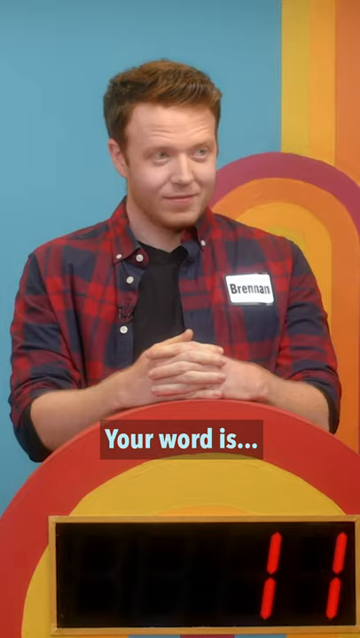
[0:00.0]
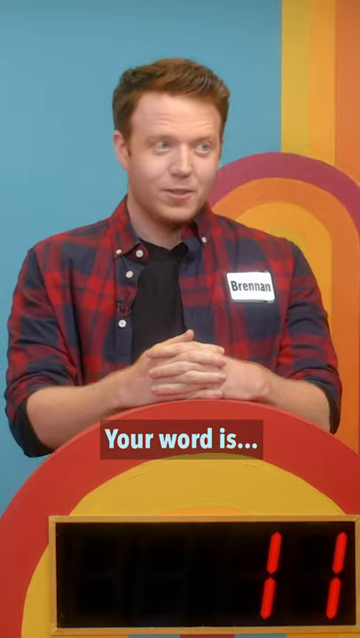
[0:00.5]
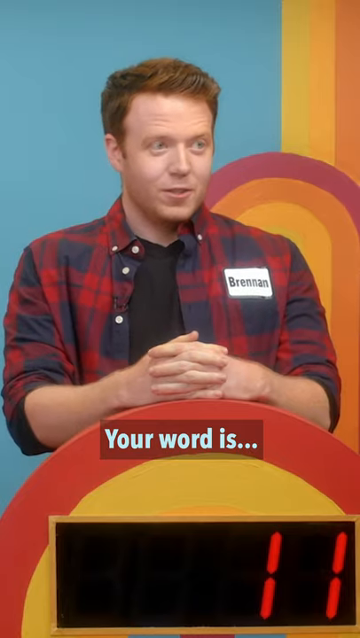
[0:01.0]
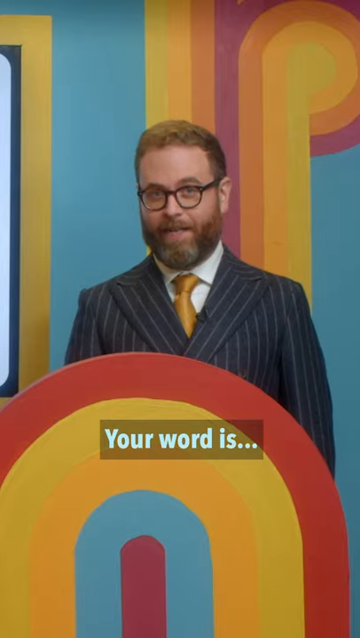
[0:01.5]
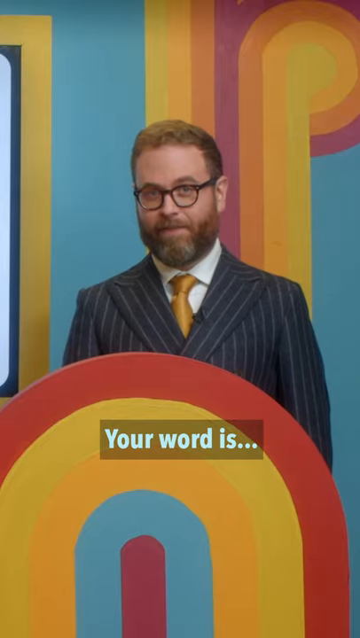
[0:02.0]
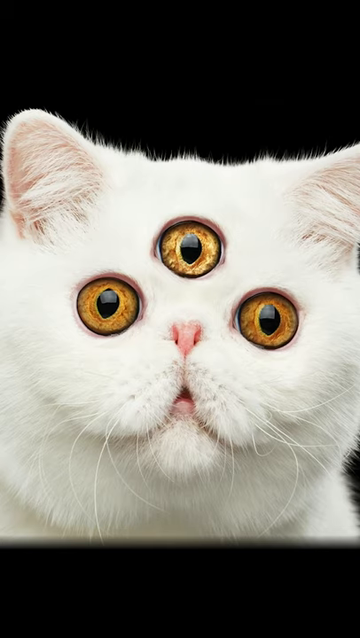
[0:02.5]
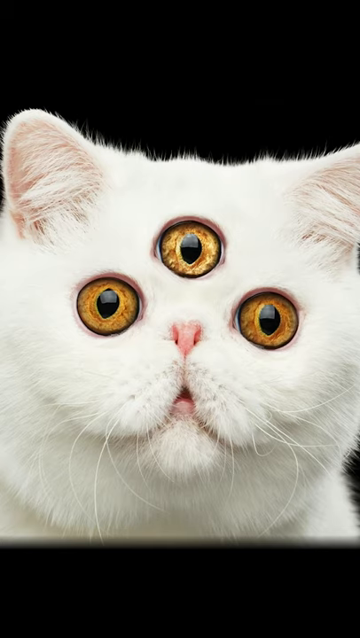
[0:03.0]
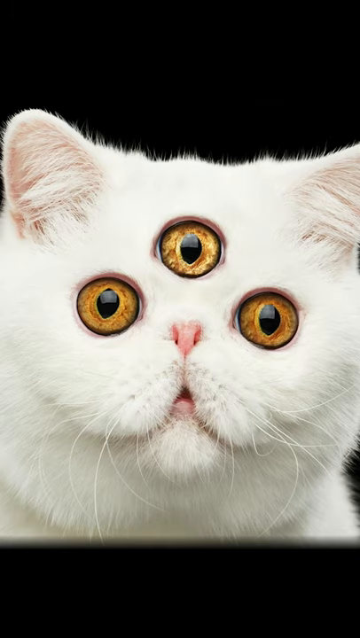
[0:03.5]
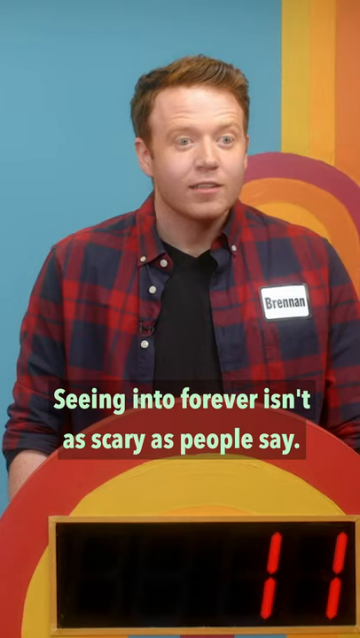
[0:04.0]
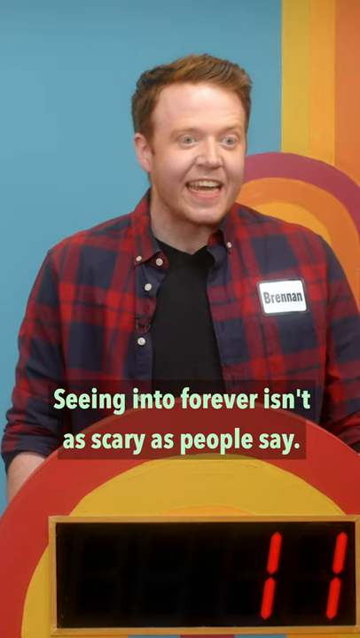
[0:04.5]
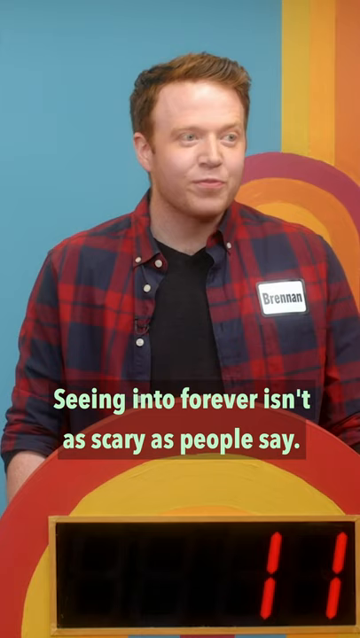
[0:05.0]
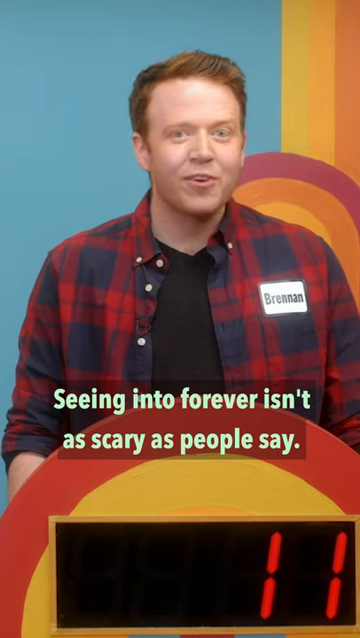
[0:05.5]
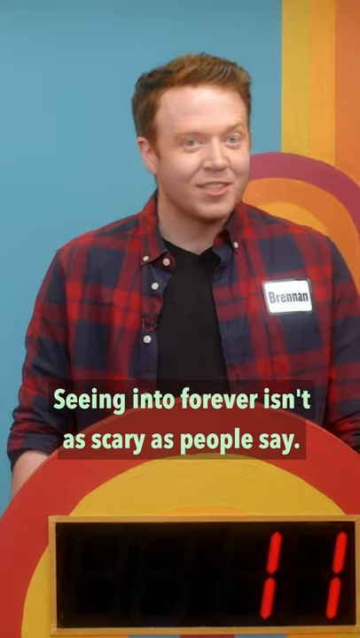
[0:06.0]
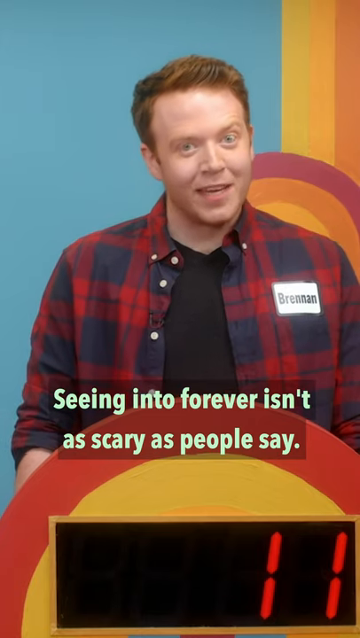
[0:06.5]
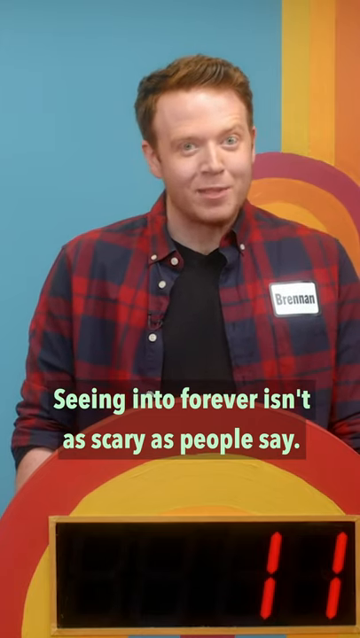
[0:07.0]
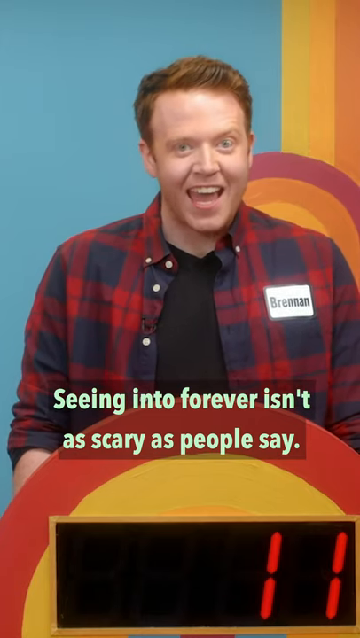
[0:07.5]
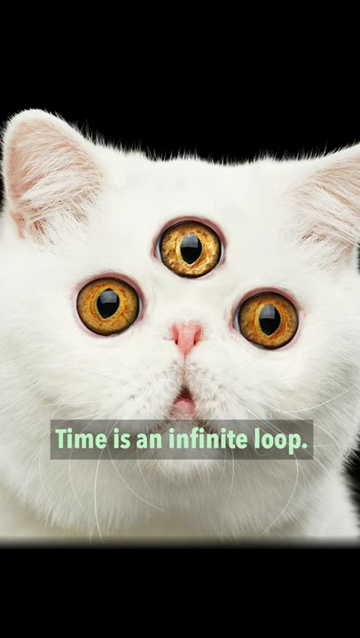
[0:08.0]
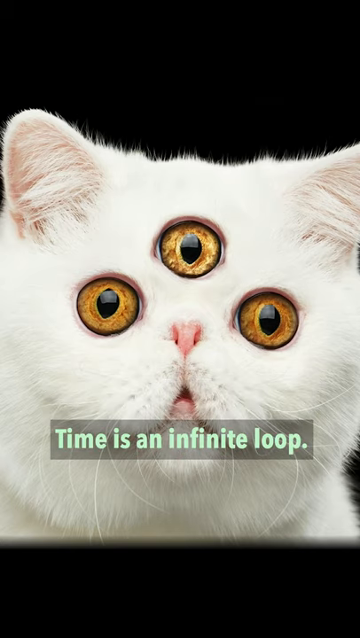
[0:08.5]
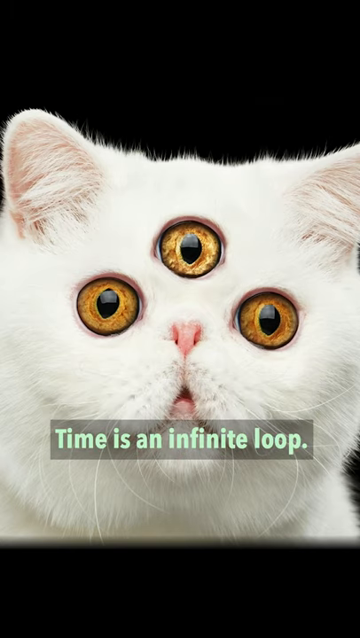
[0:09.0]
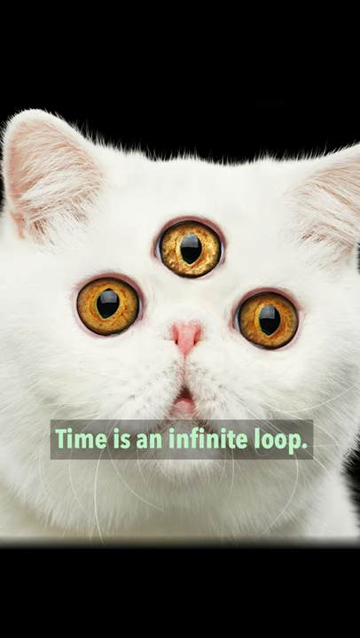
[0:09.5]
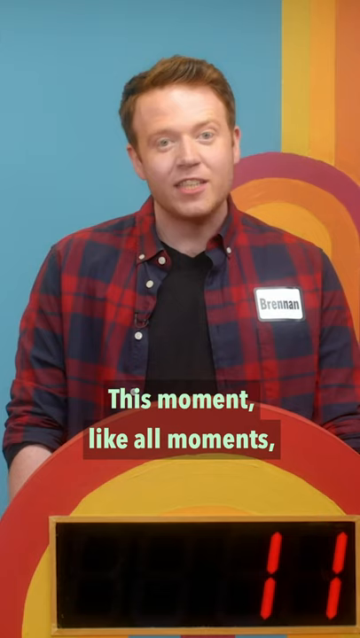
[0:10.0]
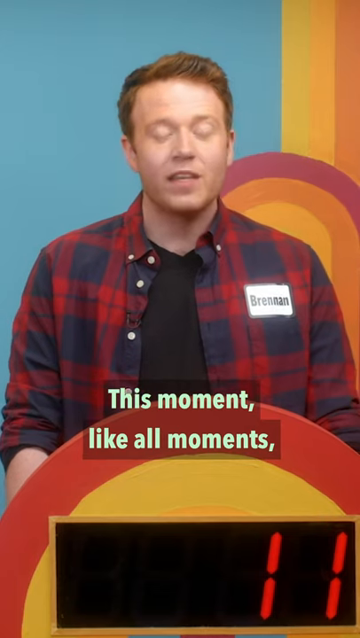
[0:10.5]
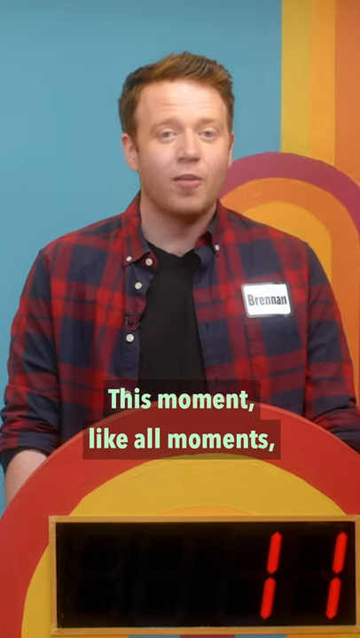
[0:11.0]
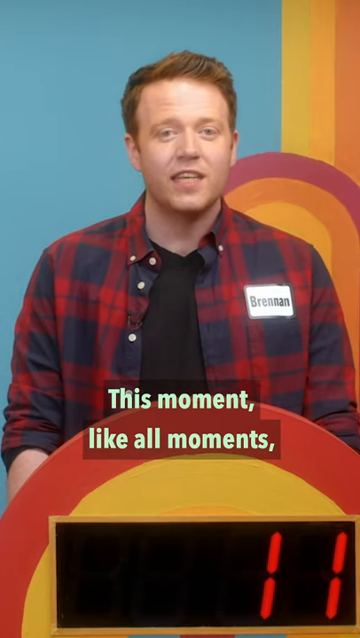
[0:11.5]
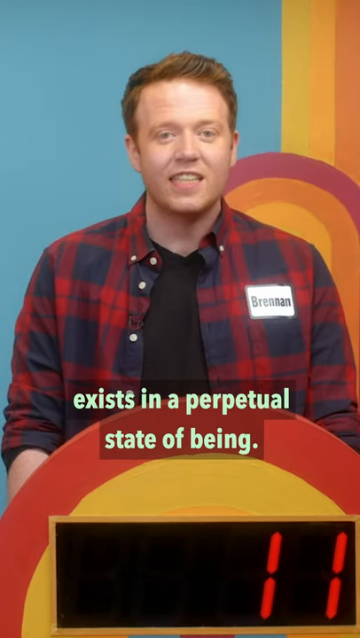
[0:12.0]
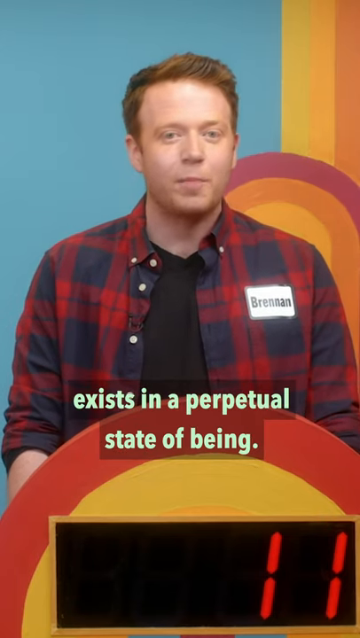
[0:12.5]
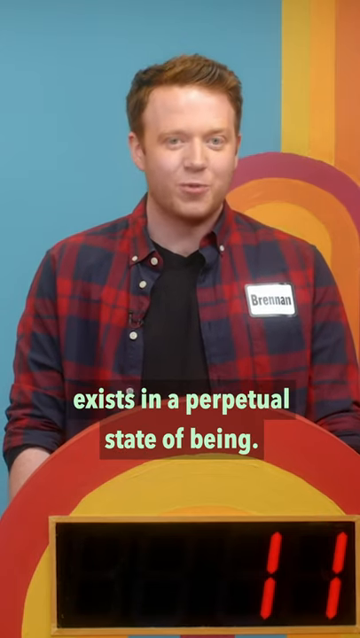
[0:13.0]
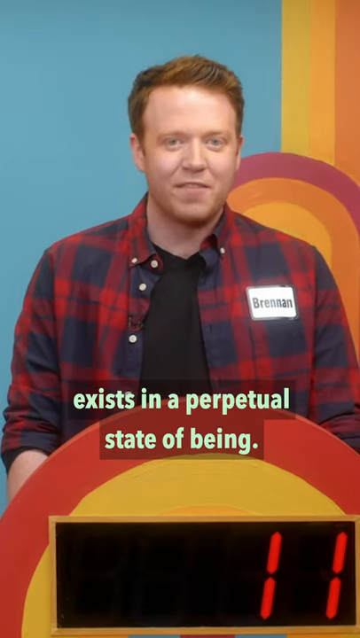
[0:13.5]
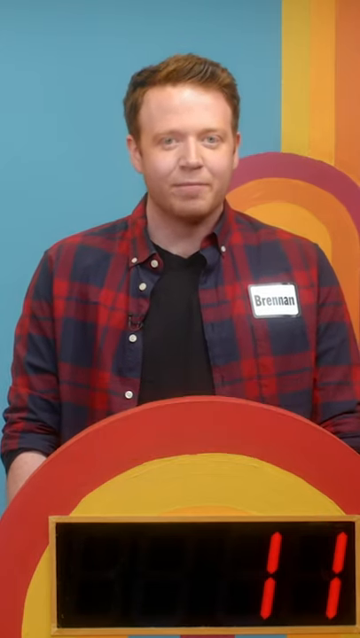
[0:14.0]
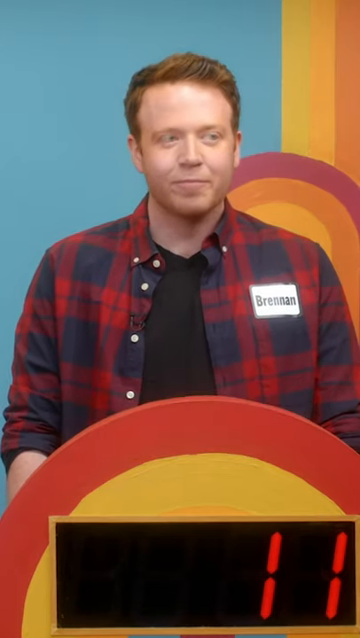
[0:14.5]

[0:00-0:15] A gentleman appears on some kind of game show, wearing a checkered blue and red shirt, with the text "your word is" under him. The host wears a striped suit with a gold tie. A white cat with three eyes also appears. The caption "Seeing into forever isn't as scary as people say" is shown underneath the gentleman as he speaks, and then "time is an infinite loop" appears underneath the white three-eyed cat. The video goes back to the man speaking, who apparently says, "this moment like all moments exists in a perpetual state of being." He is over a podium that has red and yellow on it.